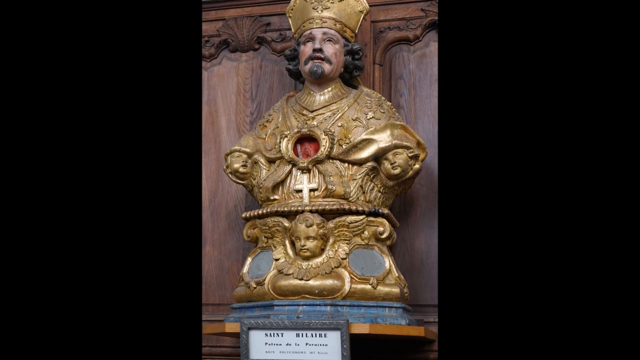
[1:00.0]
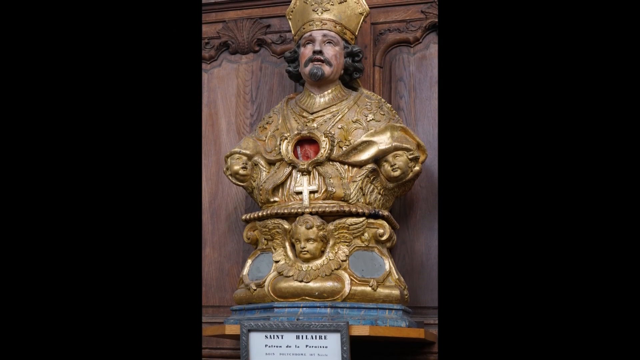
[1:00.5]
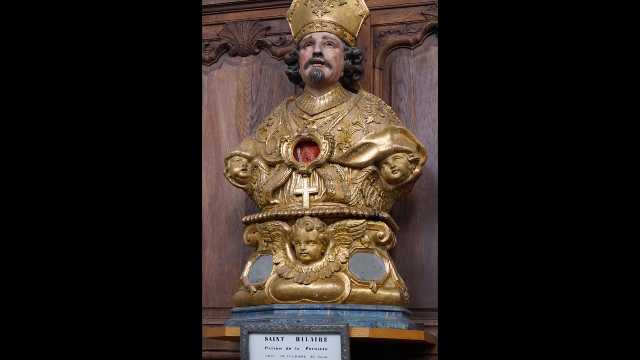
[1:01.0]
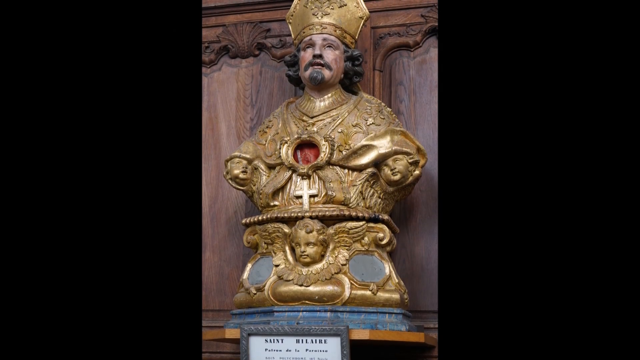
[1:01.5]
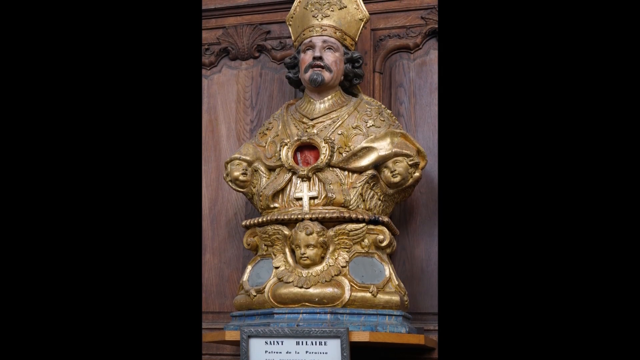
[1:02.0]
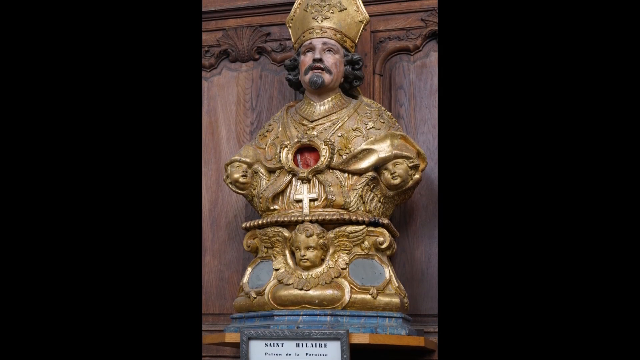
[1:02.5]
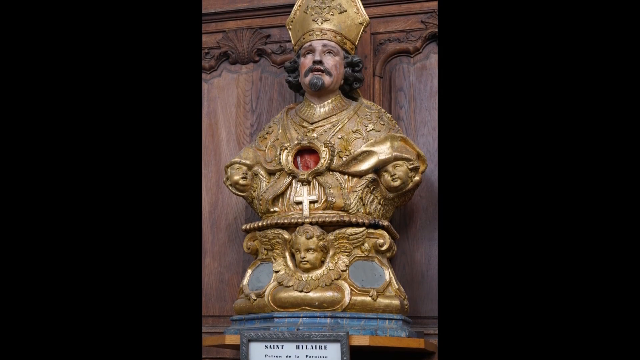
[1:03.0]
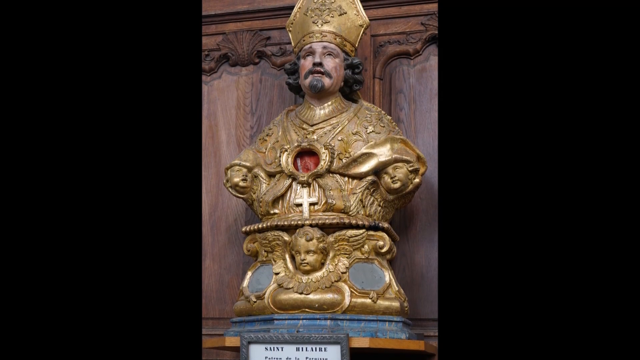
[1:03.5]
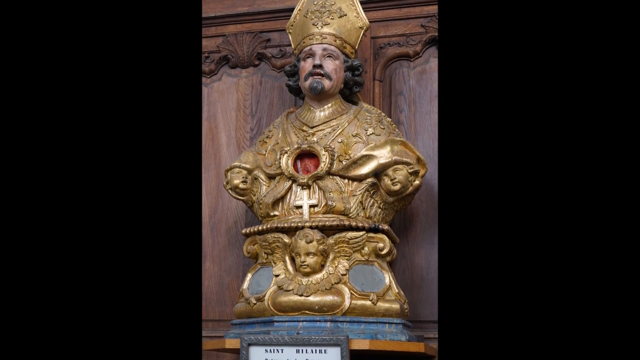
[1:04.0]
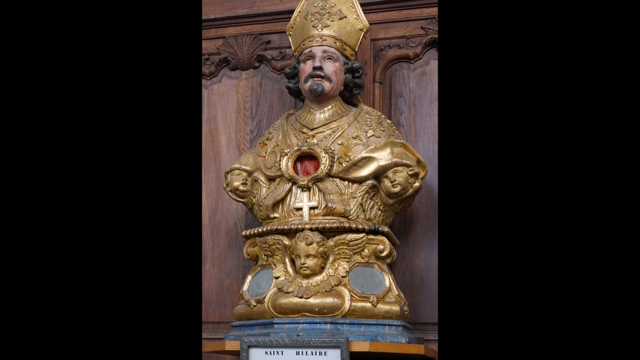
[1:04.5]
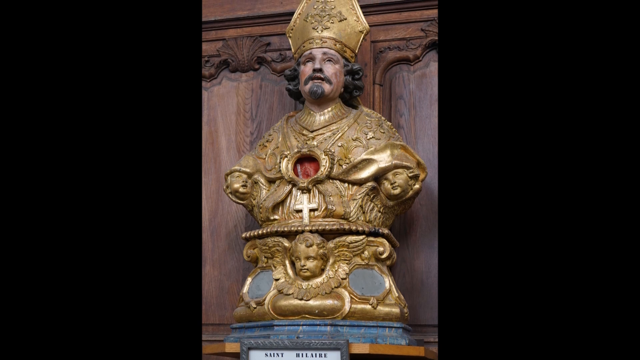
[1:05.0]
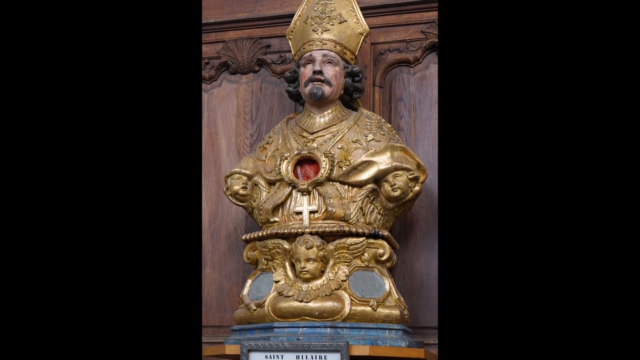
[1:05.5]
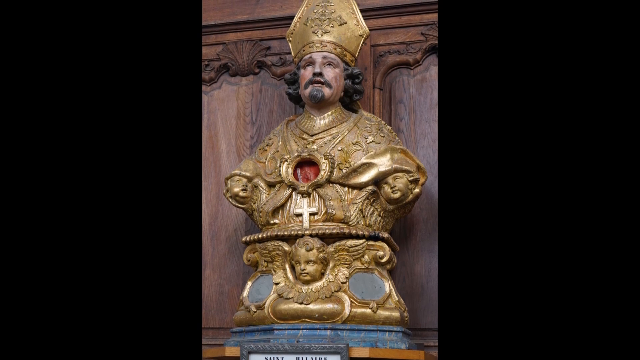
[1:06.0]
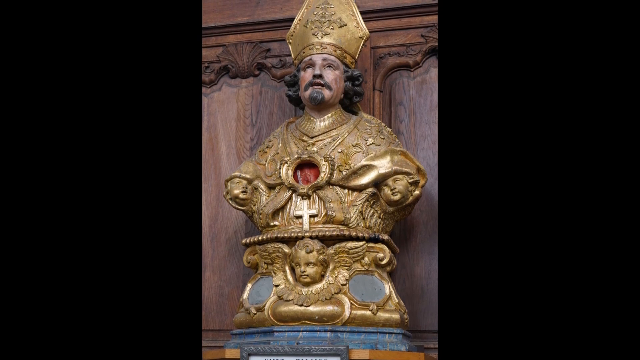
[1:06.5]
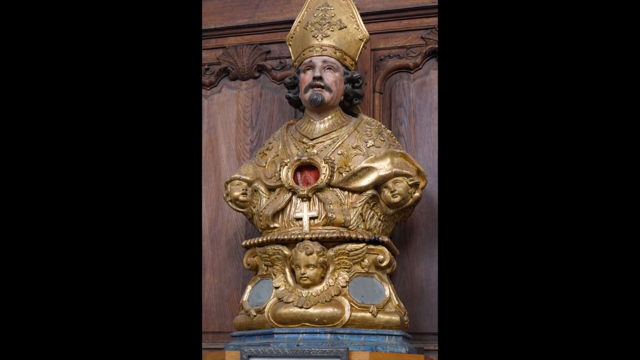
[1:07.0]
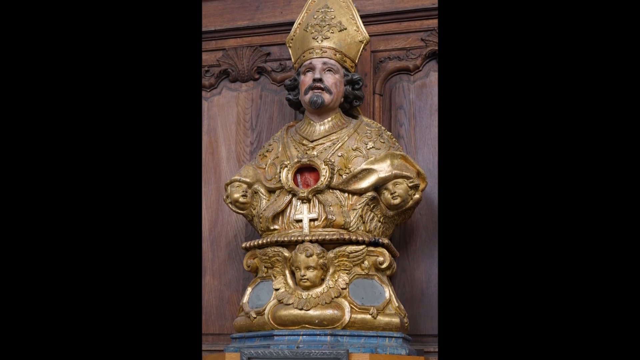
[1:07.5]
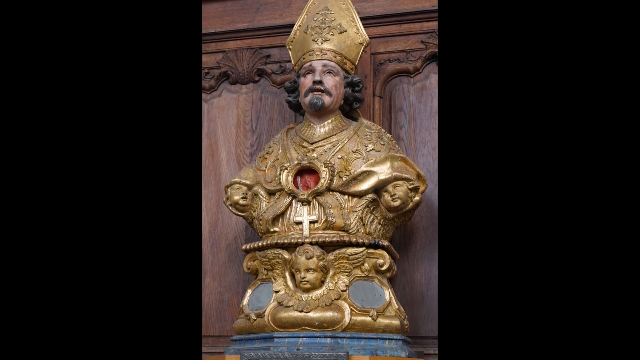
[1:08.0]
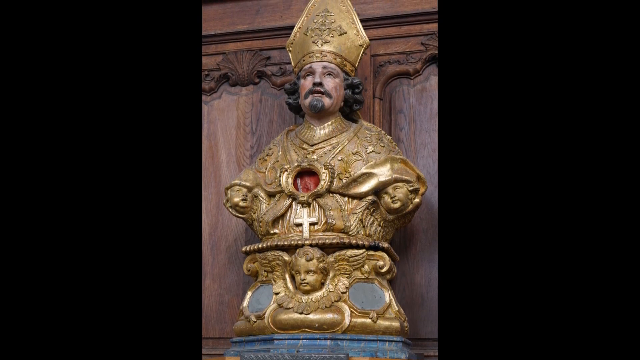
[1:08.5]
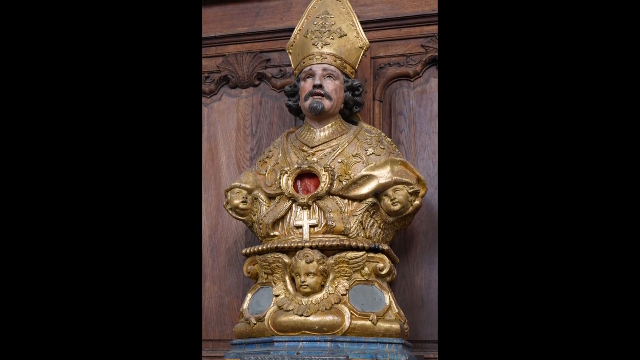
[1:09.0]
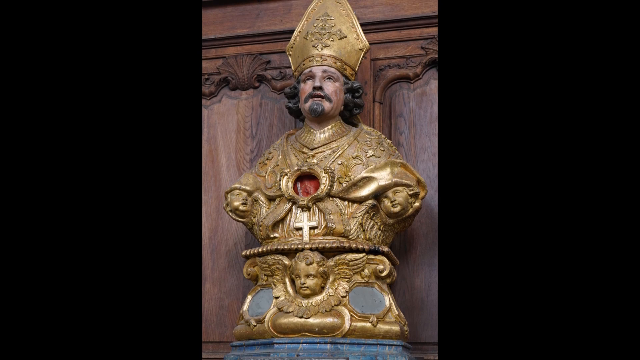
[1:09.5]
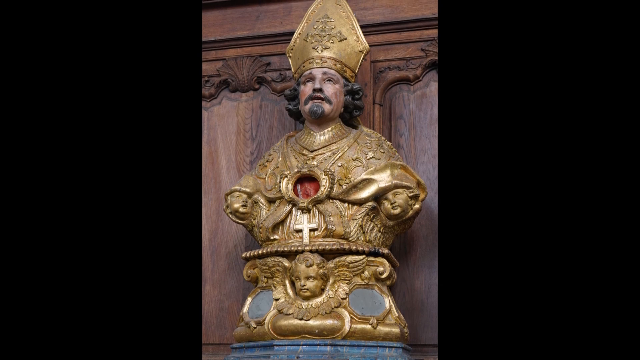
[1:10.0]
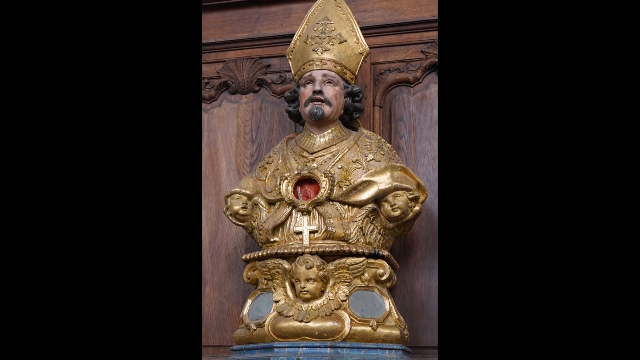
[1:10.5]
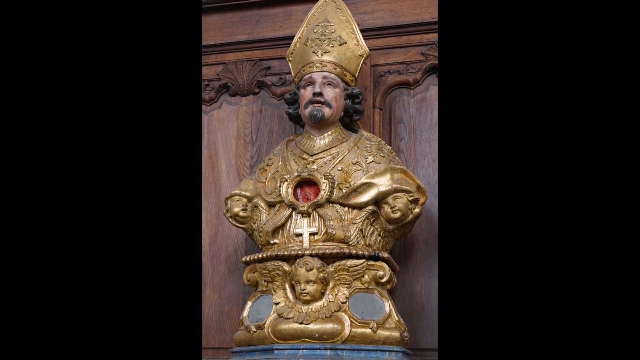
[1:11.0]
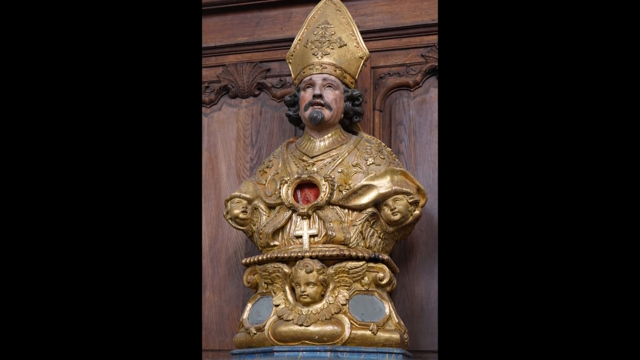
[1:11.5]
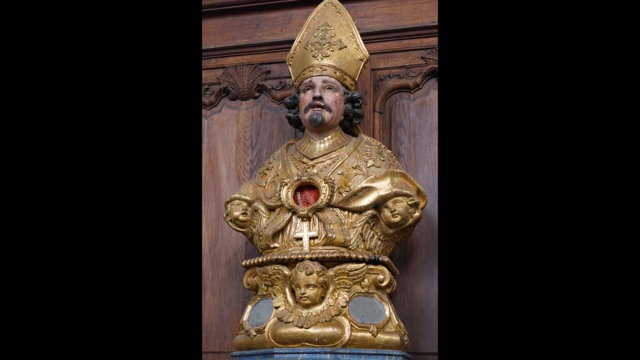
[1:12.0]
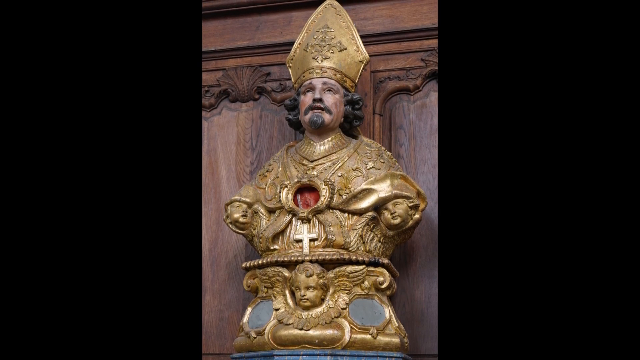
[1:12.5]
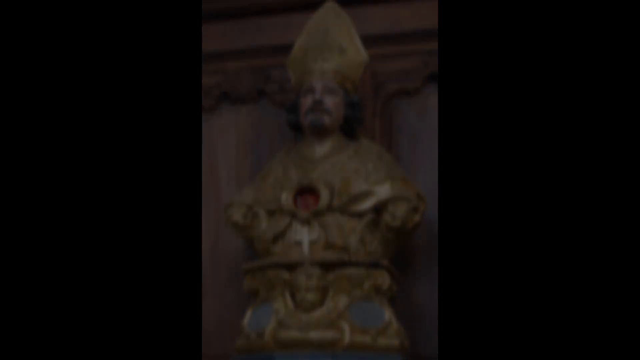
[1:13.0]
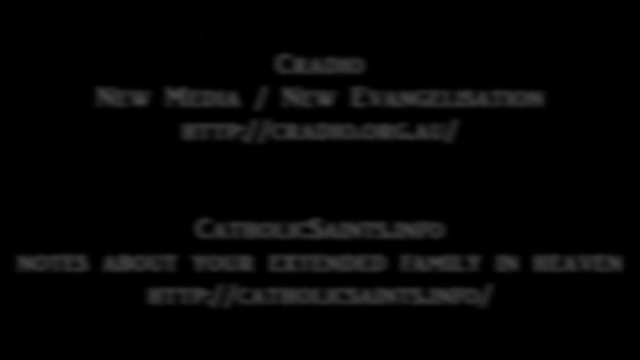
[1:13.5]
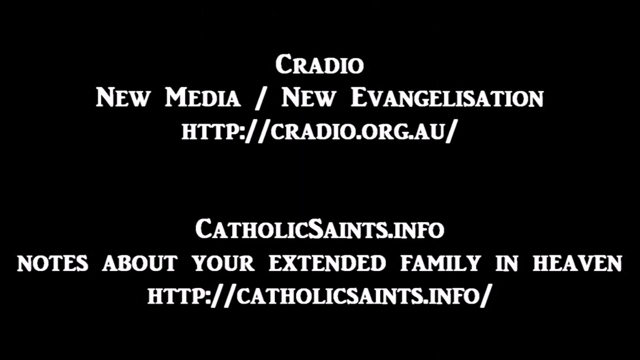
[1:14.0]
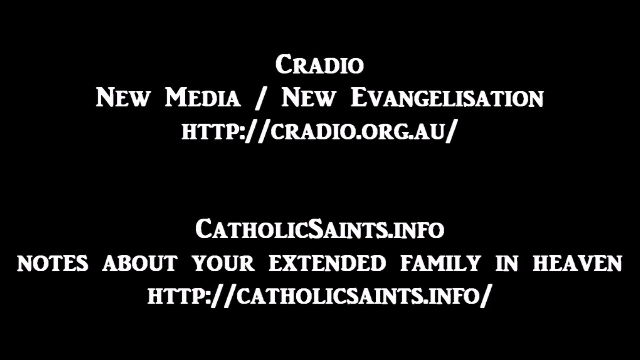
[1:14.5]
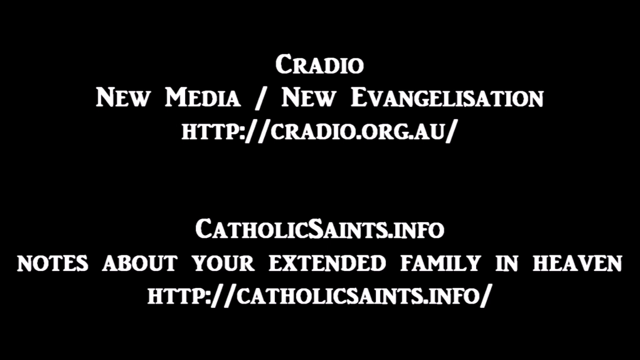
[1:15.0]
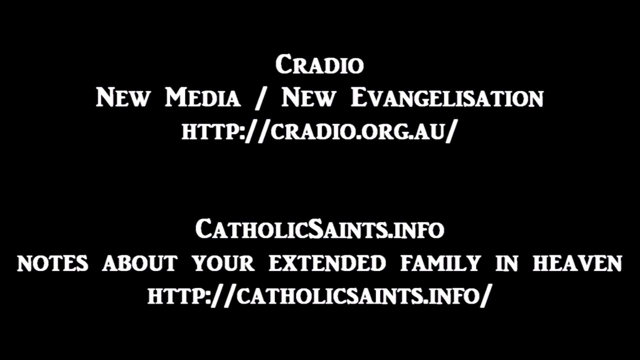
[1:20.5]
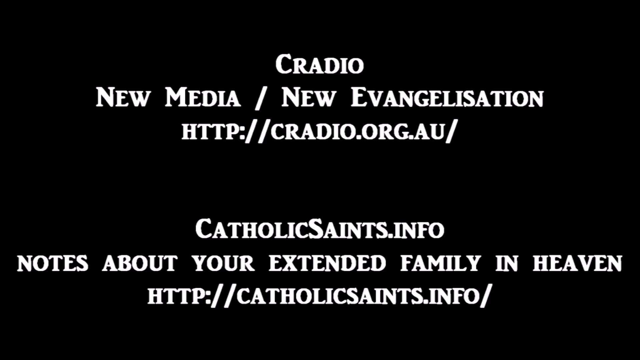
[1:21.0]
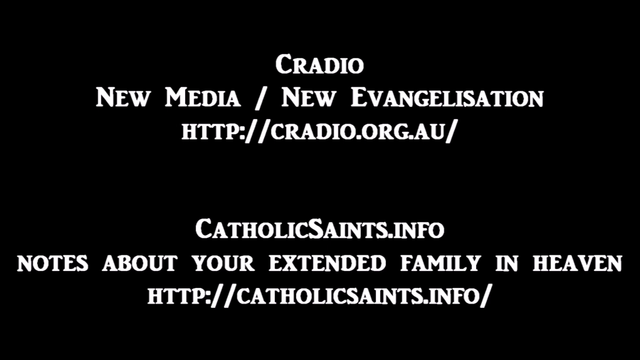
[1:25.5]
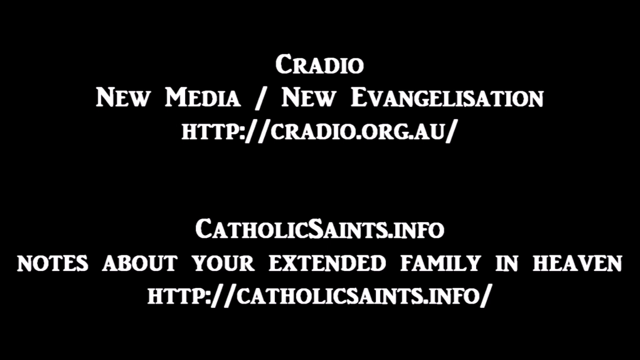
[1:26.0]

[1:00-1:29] The gold statue is shown; his legs are not visible, as the statue ends not at the waist but before the knees. He is looking upward. The statue is a lot of gold, gold plated, and seems to be on an octagon stand. Behind it is a lot of decoration in wood, apparently a wall with decorations. The fancy gold goes up to his neck, maybe right up to under his chin, and his face is visible. Where his arms should be are the faces of chubby little babies, angels, and below his waist is another angel face with some of its wings. This is the last picture, which is from Cradio, catholicsaints.info.